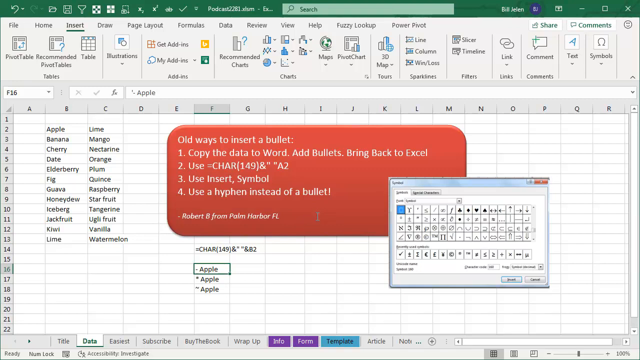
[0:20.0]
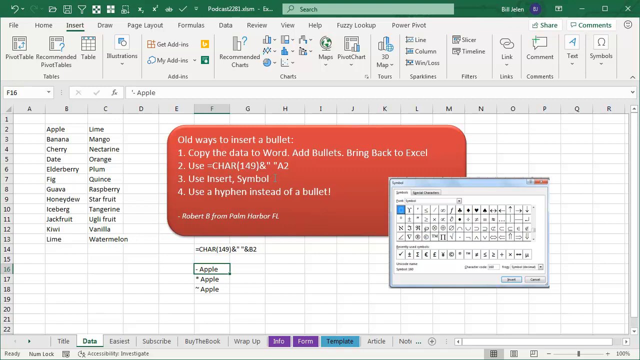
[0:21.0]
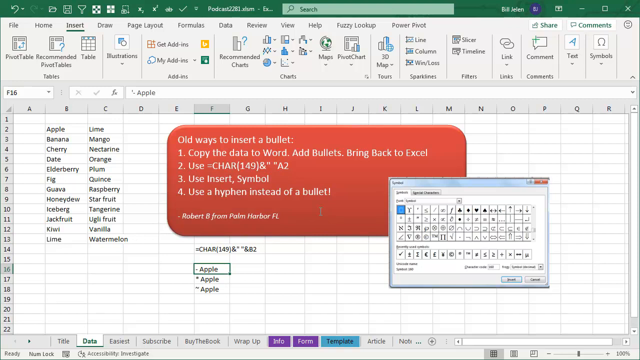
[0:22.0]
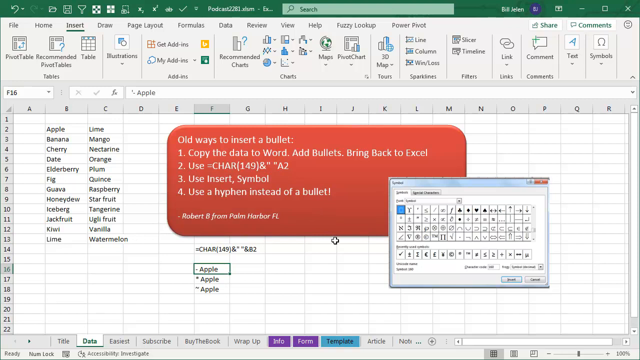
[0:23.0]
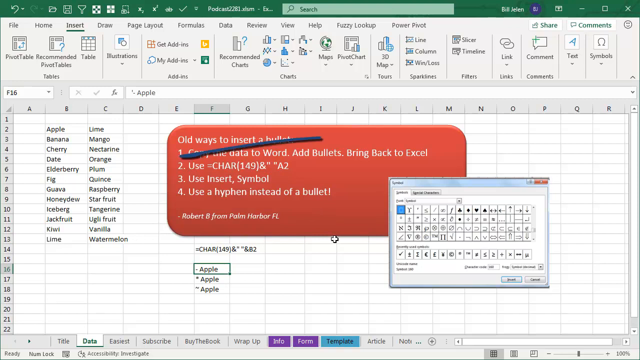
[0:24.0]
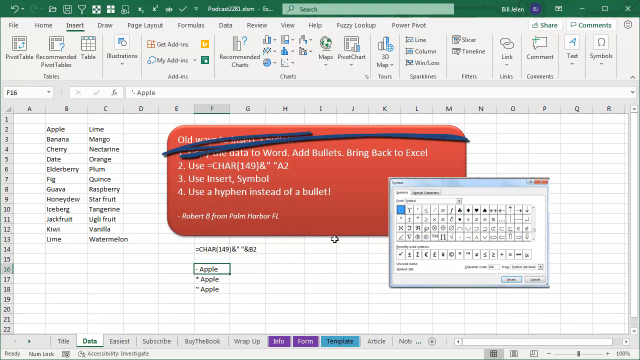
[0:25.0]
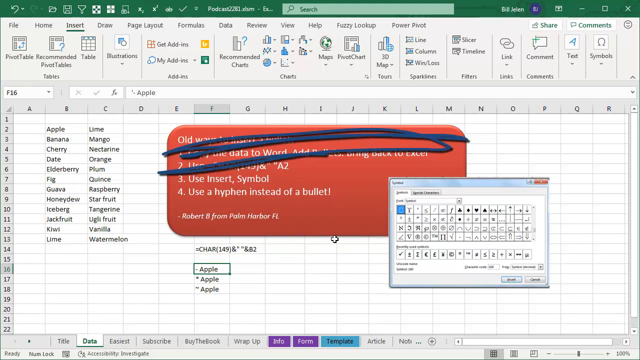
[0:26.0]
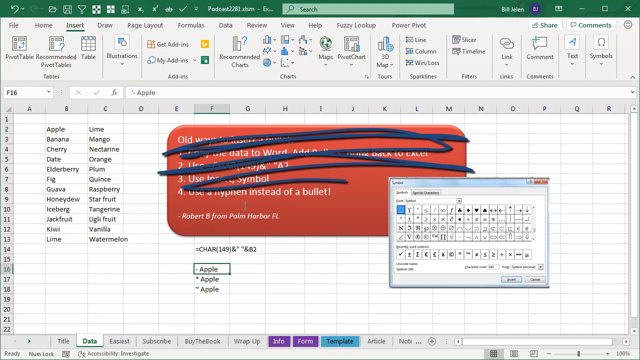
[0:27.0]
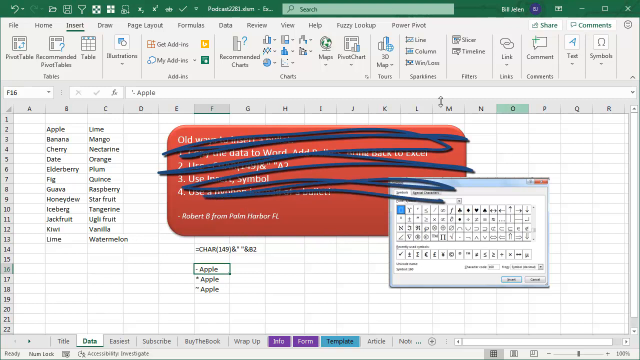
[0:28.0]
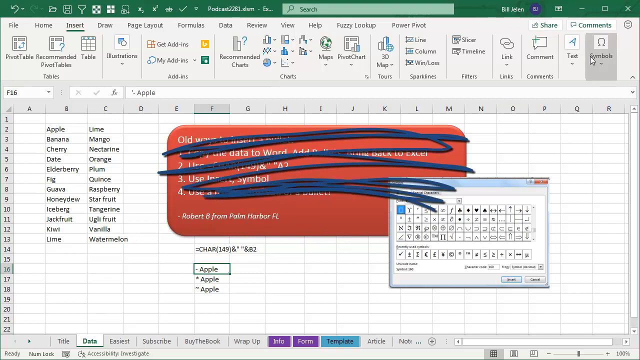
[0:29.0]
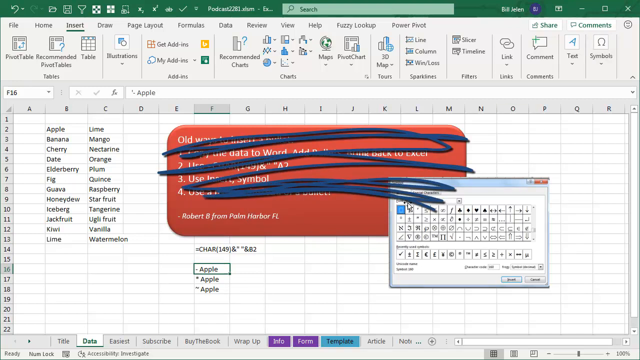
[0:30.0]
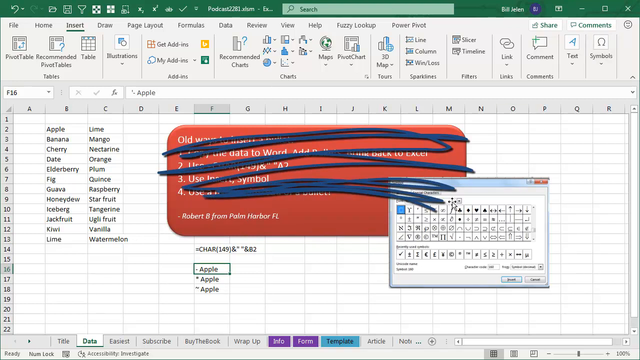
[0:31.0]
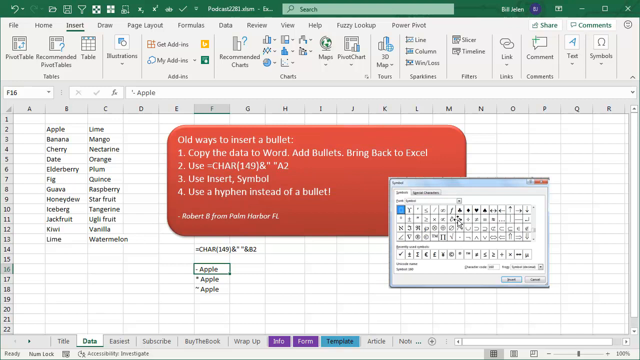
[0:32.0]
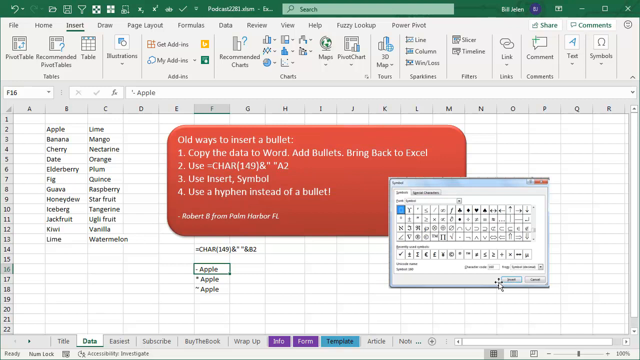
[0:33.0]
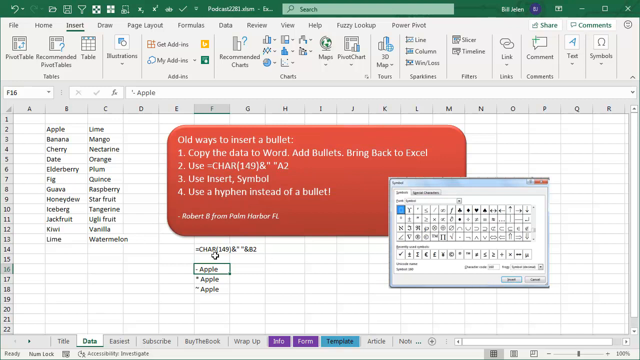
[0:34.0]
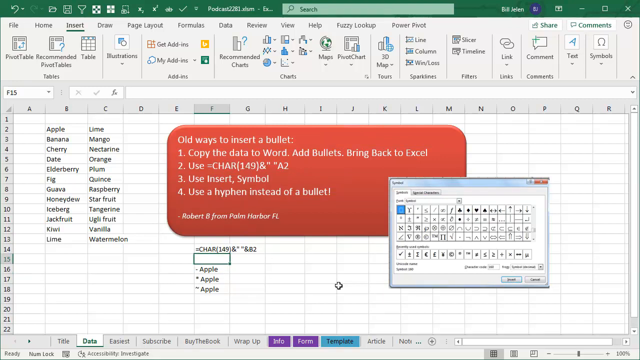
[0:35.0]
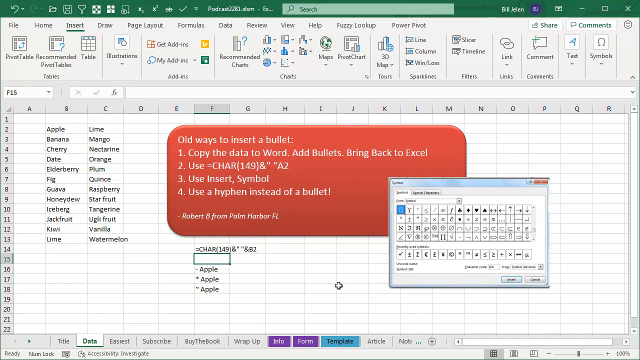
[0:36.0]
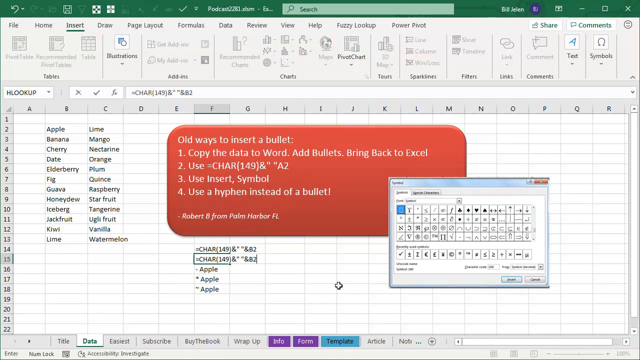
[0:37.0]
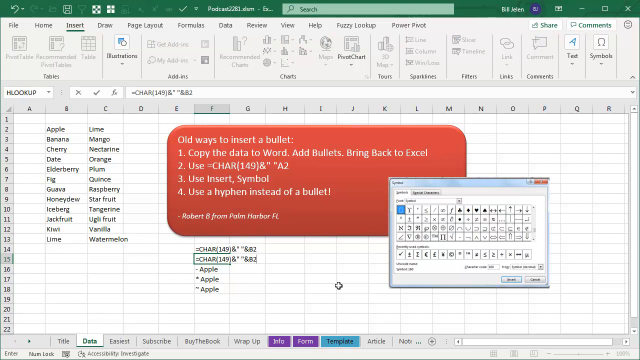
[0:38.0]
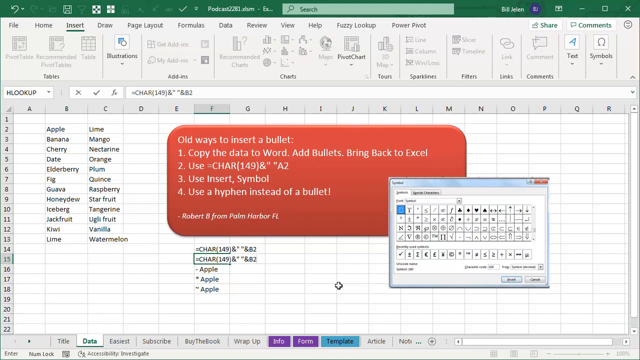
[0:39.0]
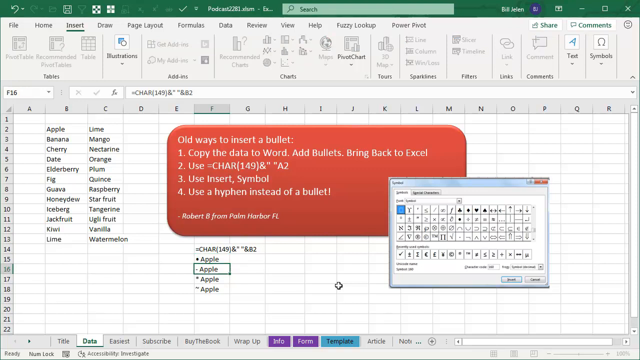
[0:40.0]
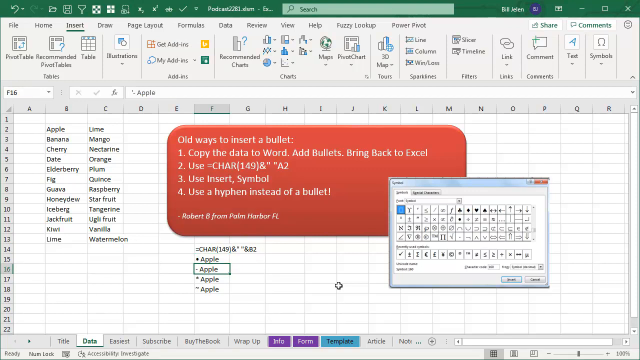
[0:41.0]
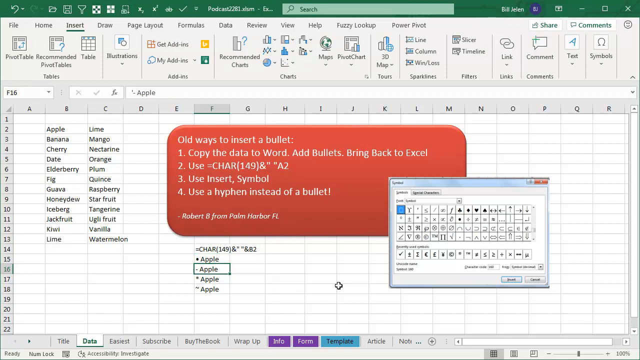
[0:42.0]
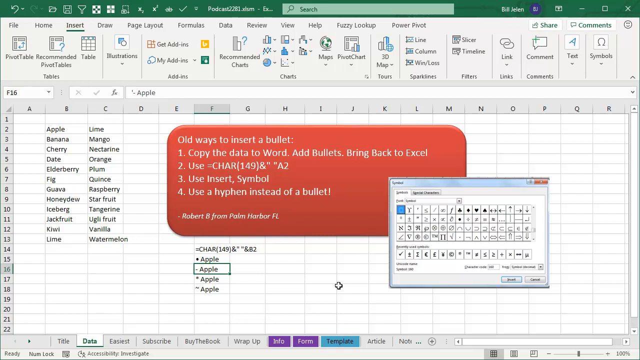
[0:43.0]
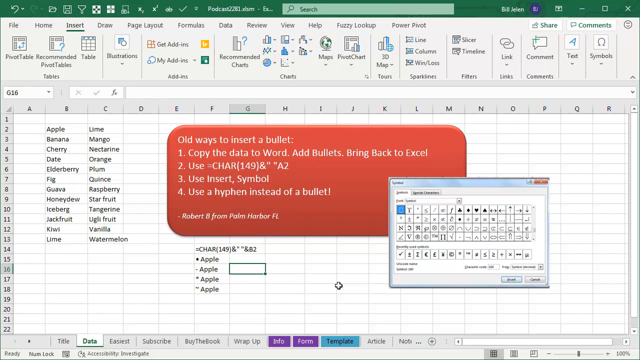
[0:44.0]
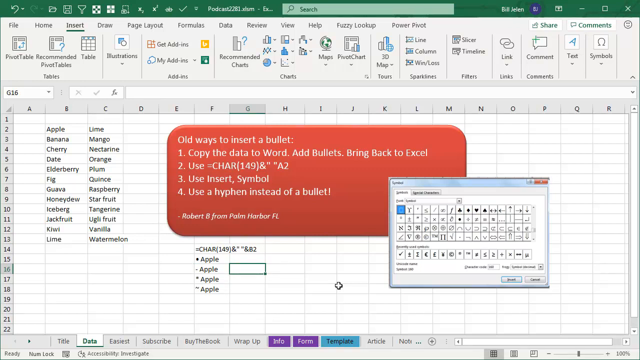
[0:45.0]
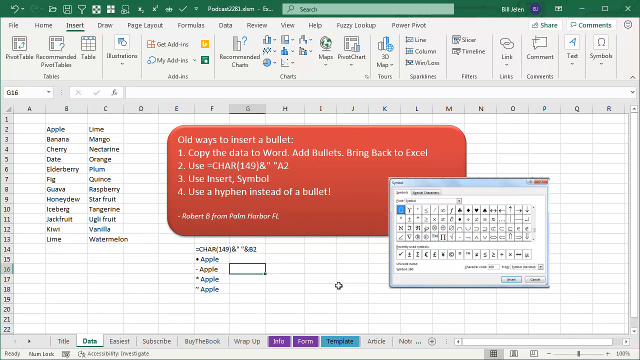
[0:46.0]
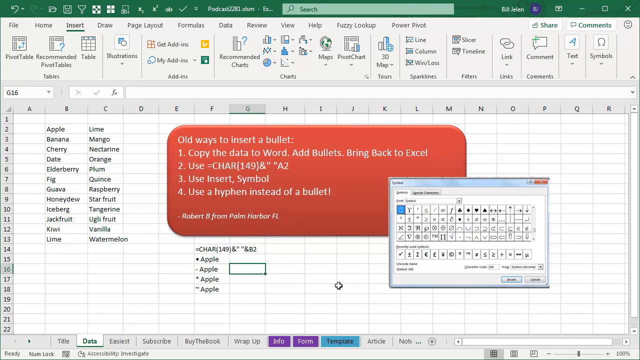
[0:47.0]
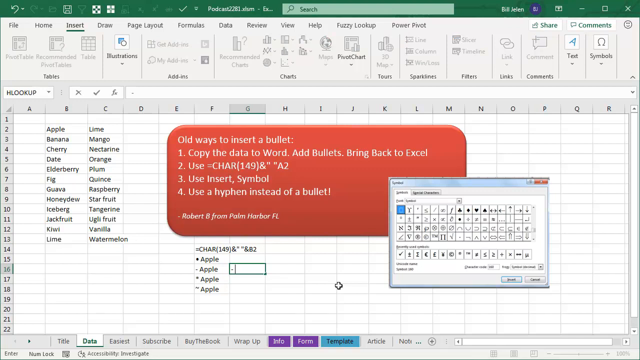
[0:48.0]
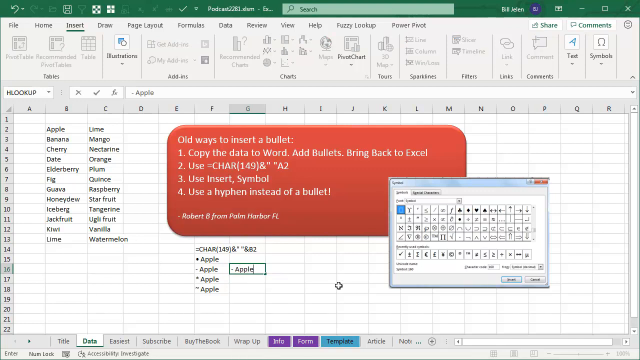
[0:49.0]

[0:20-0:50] On the Excel spreadsheet, a mouse cursor moves over a page with some typed words. Columns B and C contain words running vertically. Around column E there is a large rectangular box with white text on a red background giving Excel instructions about inserting symbols, such as hyphens, instead of a bullet. The person moves the mouse left and right, and then a scribble appears on the page, apparently drawn with some kind of paint tool, blacking out the instructions in the red box. The cursor then clicks on a cell beneath the red box, clicks off to the right, types the word apple, and clicks back onto the word apple, demonstrating something.